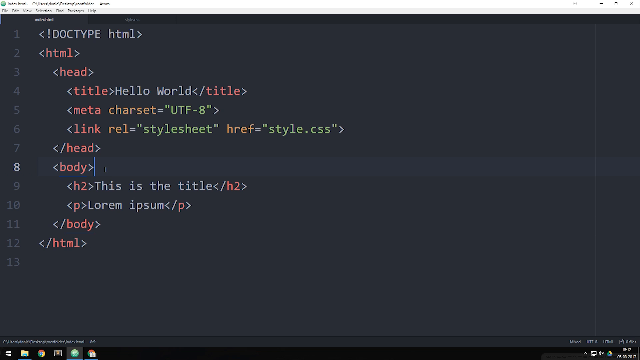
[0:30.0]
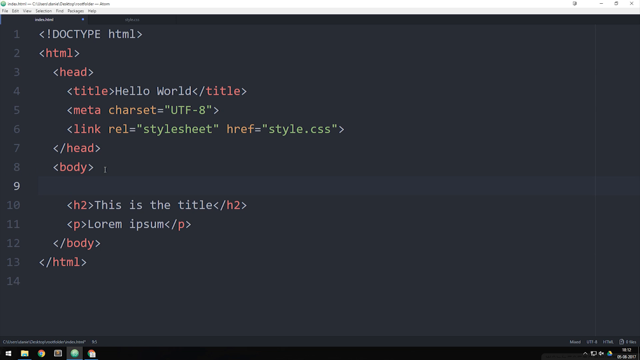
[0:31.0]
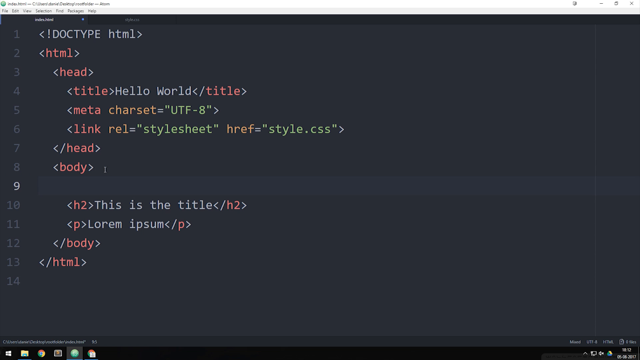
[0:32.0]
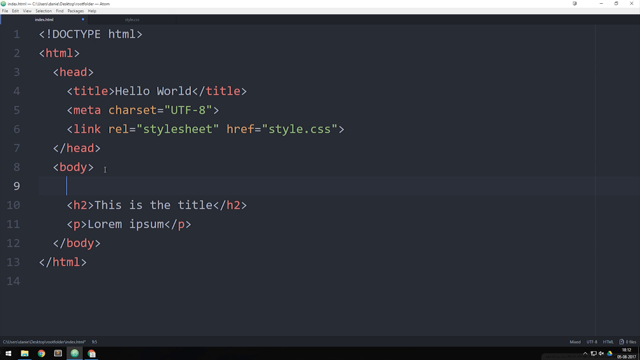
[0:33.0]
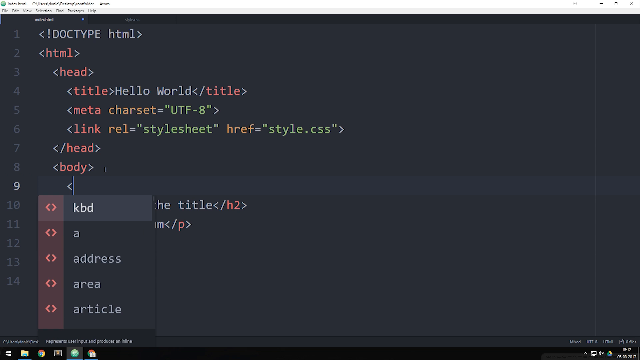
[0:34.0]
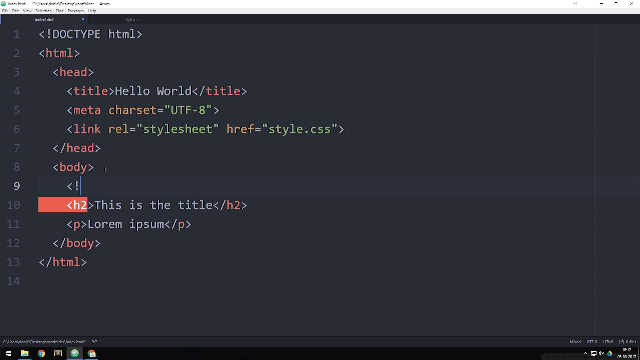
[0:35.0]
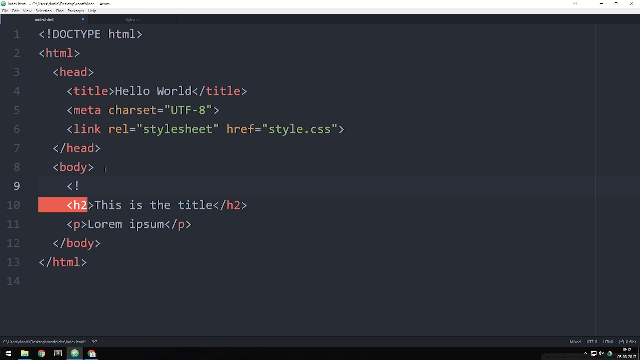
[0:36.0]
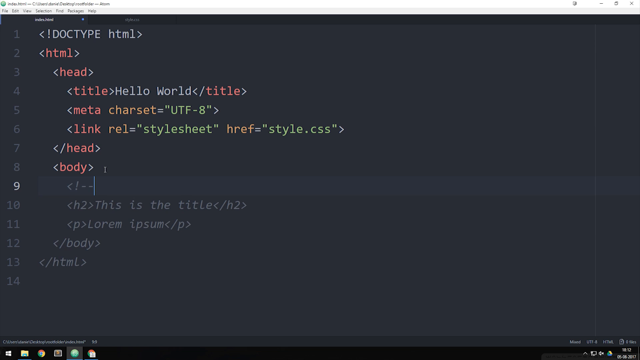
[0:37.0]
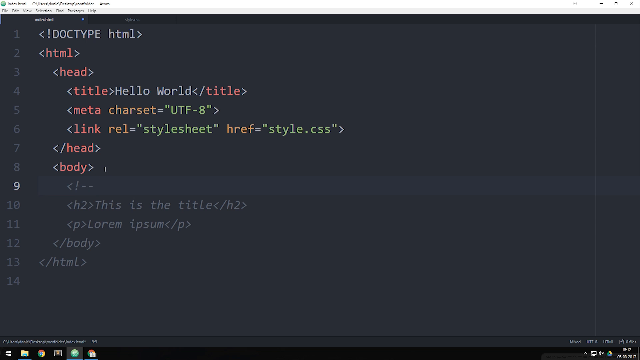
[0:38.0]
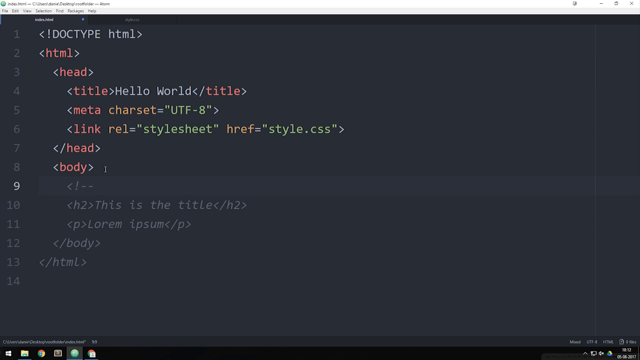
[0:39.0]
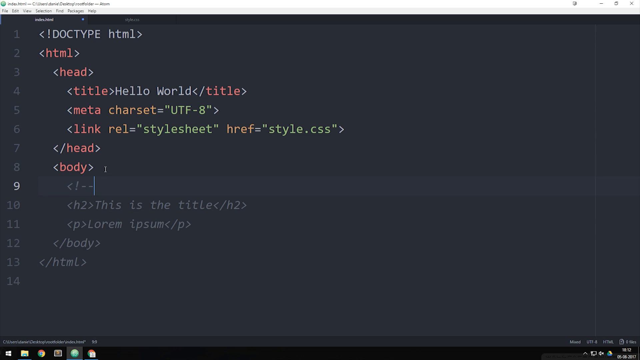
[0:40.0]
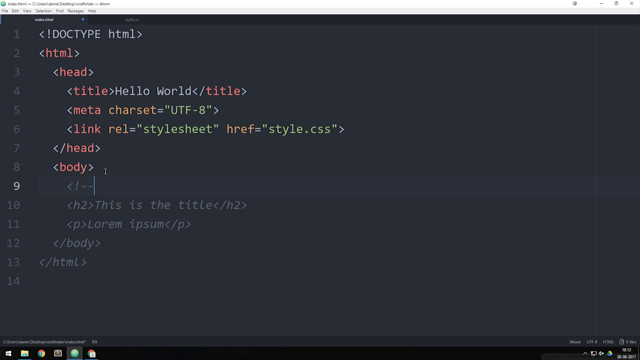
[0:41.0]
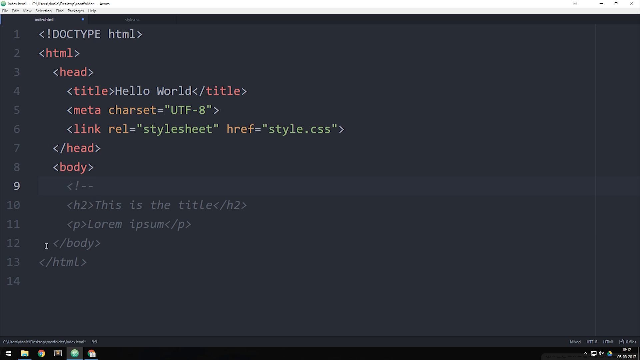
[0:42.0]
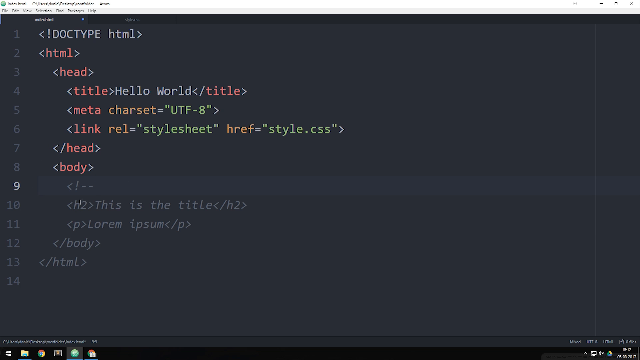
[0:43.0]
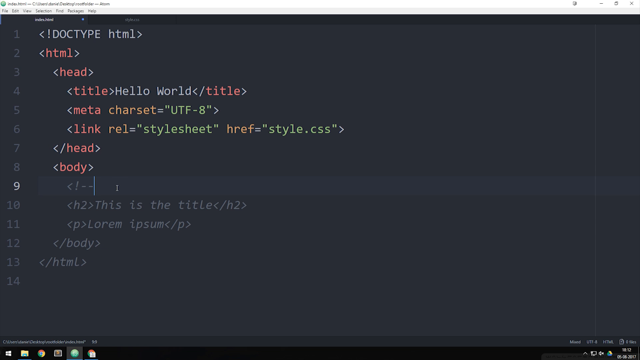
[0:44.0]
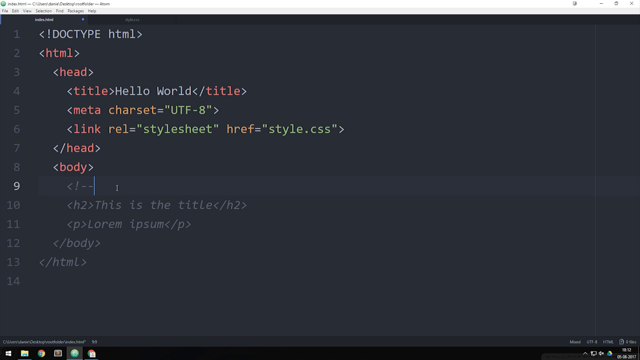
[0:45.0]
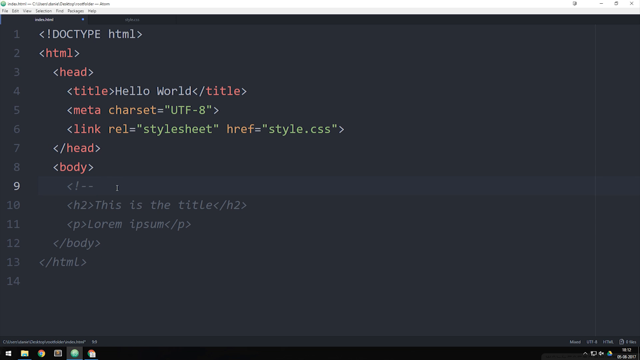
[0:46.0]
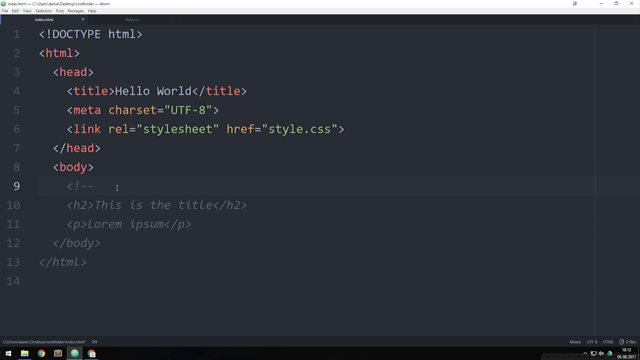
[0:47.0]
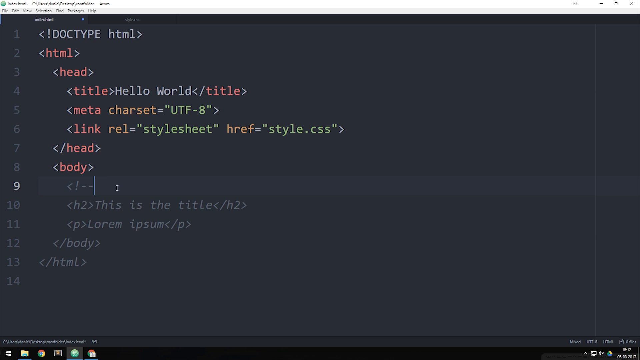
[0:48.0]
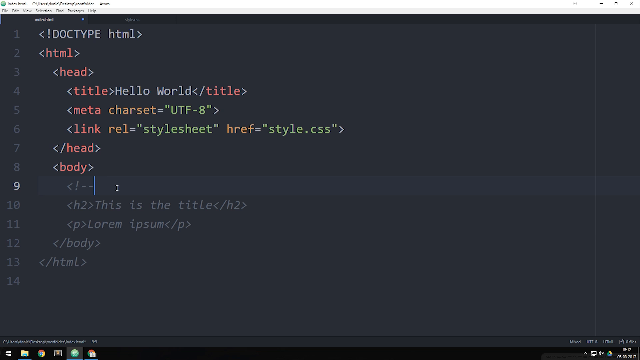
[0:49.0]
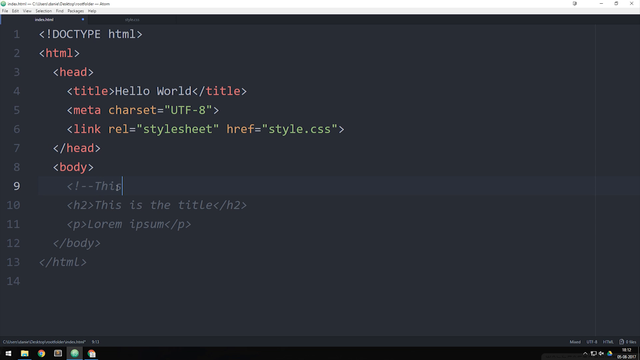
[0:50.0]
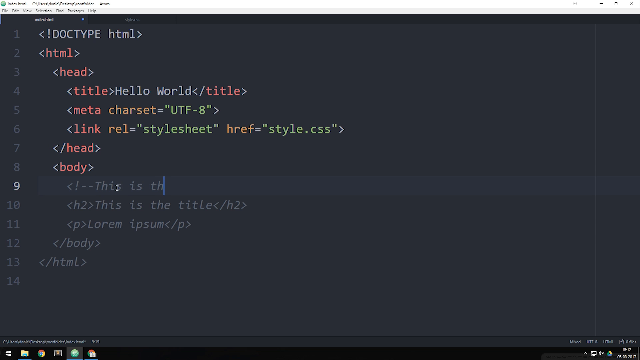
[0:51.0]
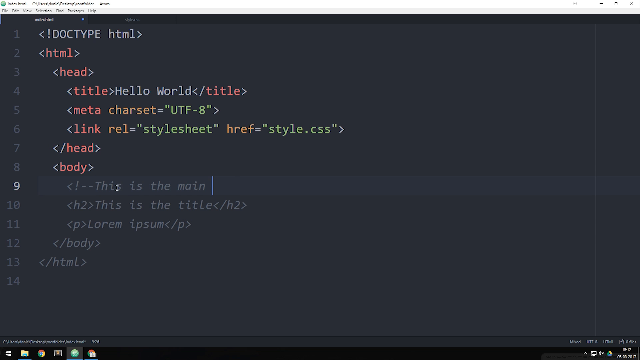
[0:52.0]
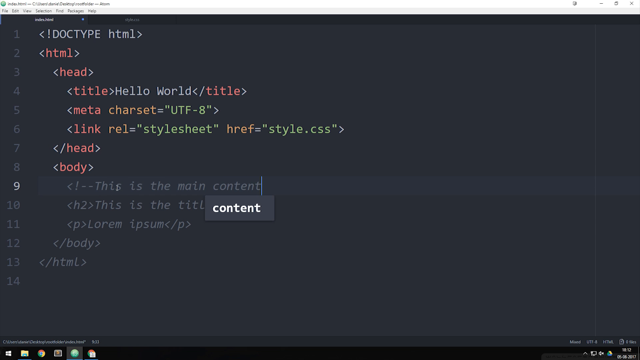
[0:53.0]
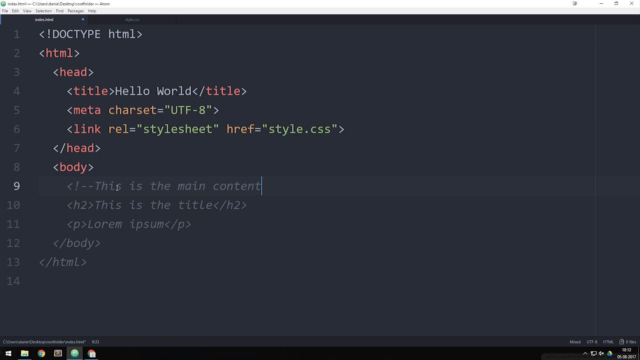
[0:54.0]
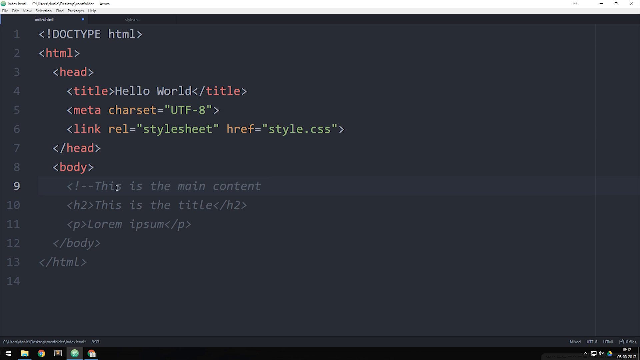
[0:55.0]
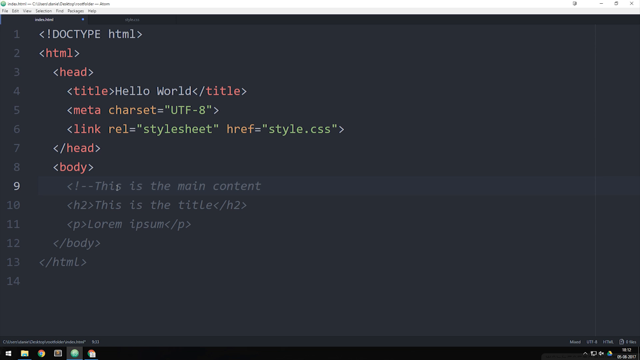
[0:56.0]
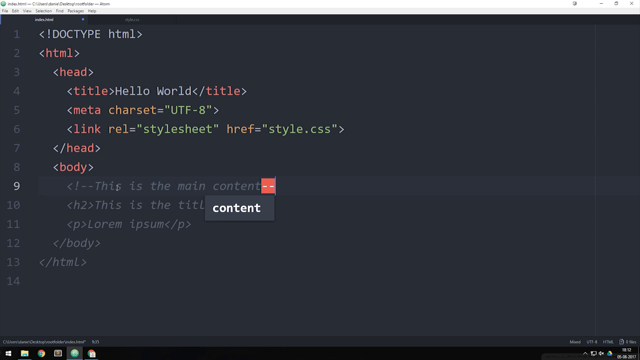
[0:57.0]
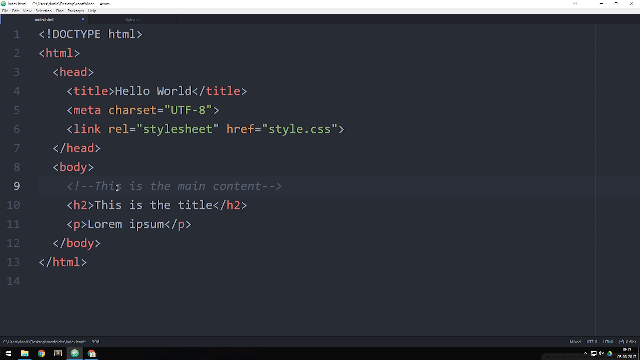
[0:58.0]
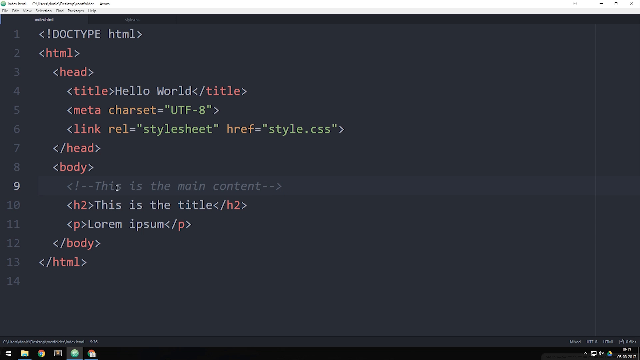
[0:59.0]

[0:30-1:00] Code for a website is shown on a dark screen, all in HTML, beginning with a document type HTML at the very top. There is a header section with the title, a meta charset and a link, then a body and the end of the code, about 12 lines in total. Line 8 is highlighted at first, then line 9, and a cursor appears under the code, blinking. The person using the computer starts to type: an arrow pointing to the left appears, and some options pop up at the very top with "KBD" at the top highlighted. The person types an exclamation mark followed by two dashes, and the cursor blinks there for a while. The person then moves the mouse in circles around the area where they are typing, almost as if drawing attention to it. They type "this is the main content", the cursor stays there, "content" becomes highlighted underneath for a second, and then they type two dashes with an arrow pointing to the right at the end. The cursor keeps blinking for a little bit.